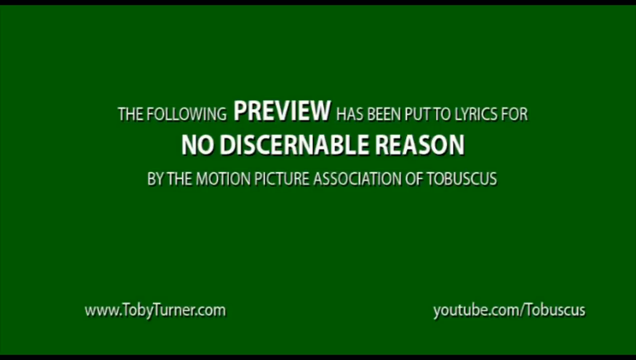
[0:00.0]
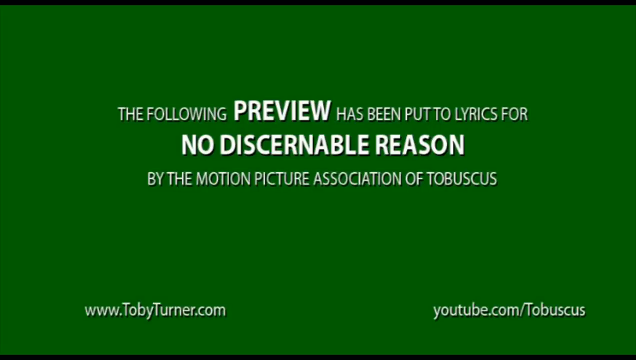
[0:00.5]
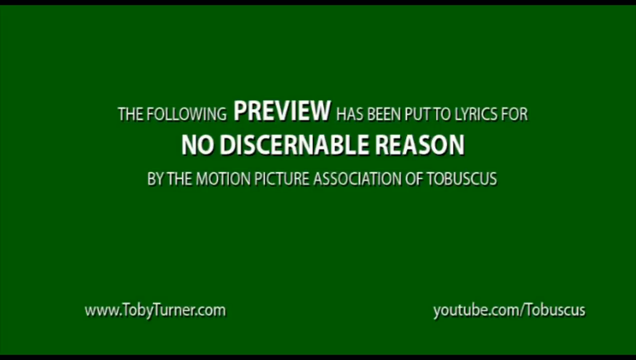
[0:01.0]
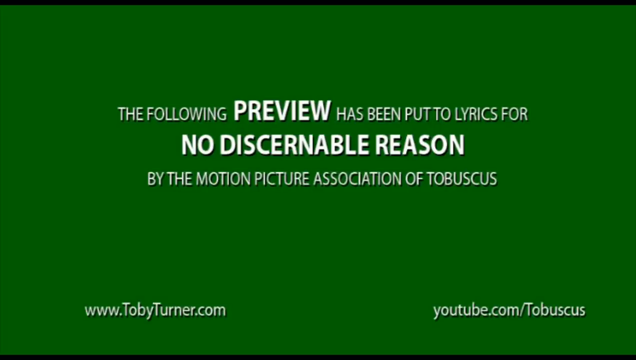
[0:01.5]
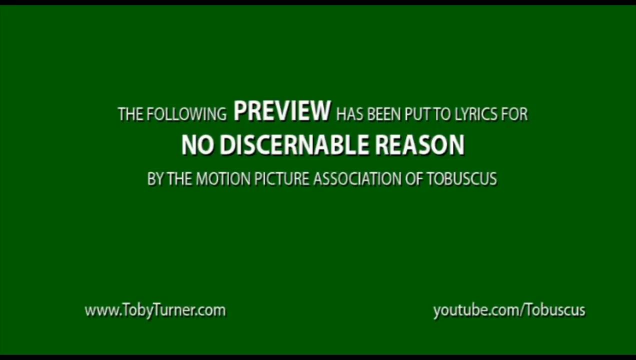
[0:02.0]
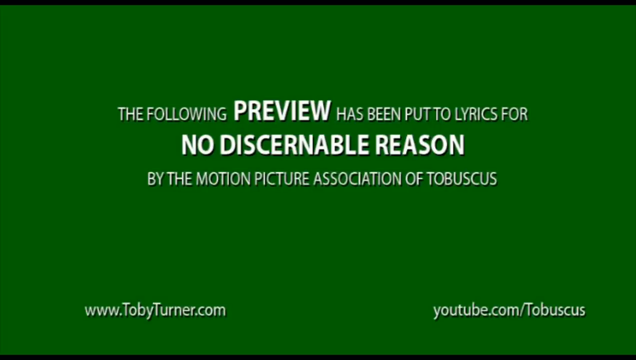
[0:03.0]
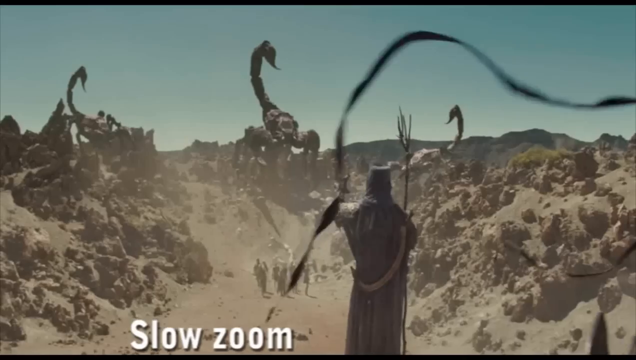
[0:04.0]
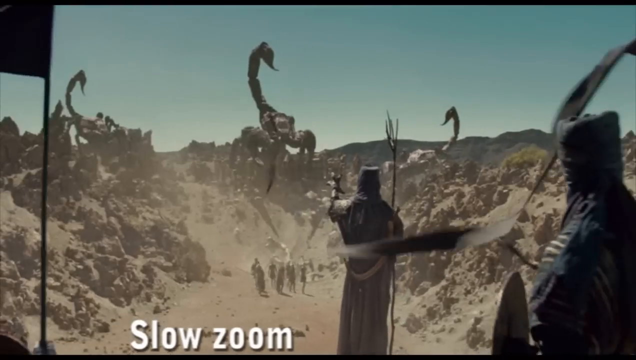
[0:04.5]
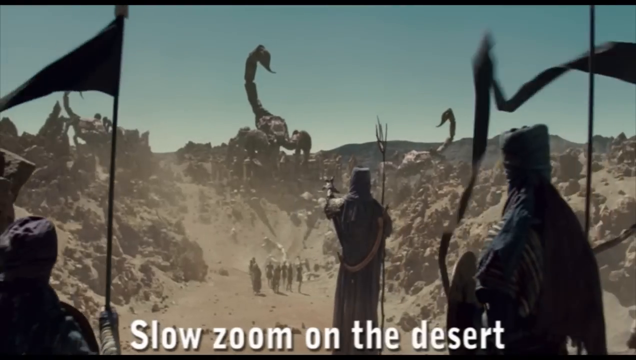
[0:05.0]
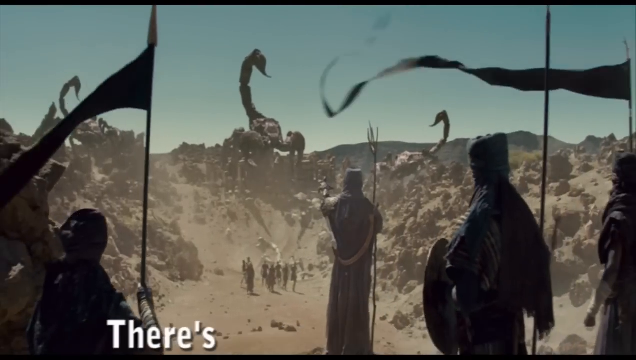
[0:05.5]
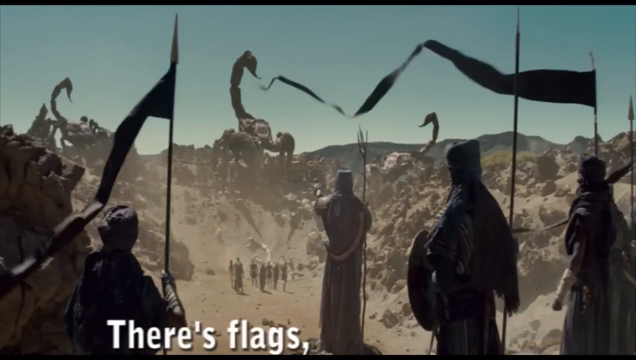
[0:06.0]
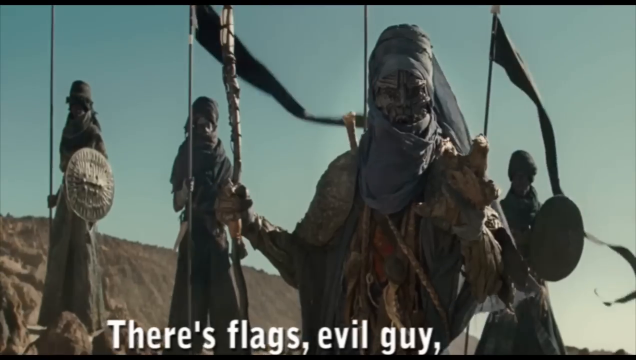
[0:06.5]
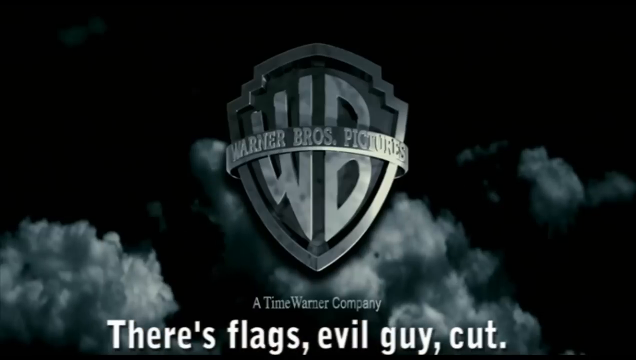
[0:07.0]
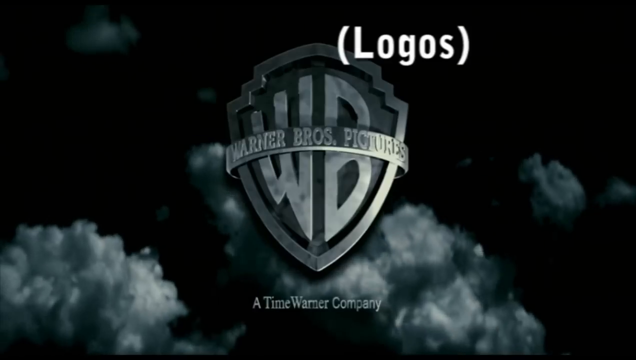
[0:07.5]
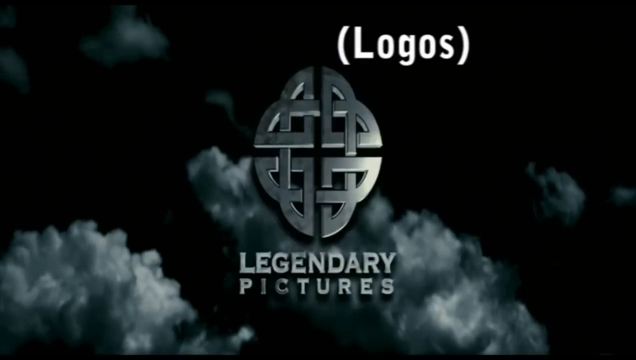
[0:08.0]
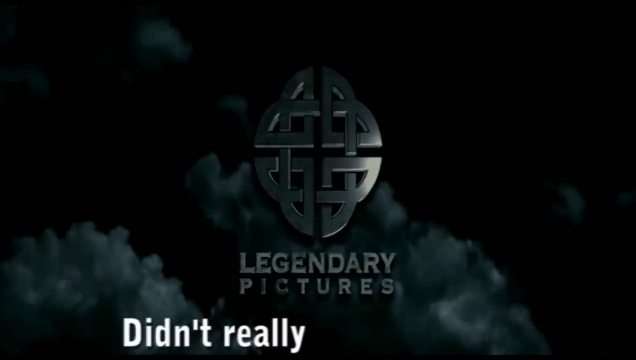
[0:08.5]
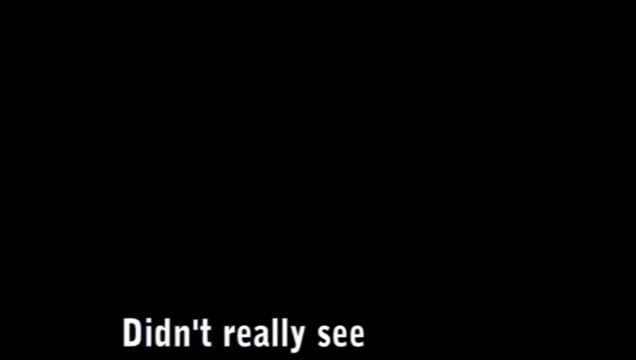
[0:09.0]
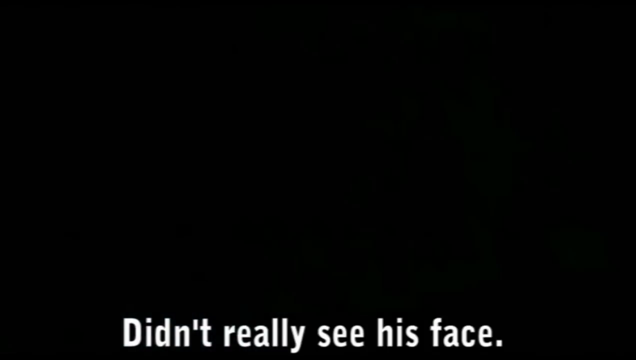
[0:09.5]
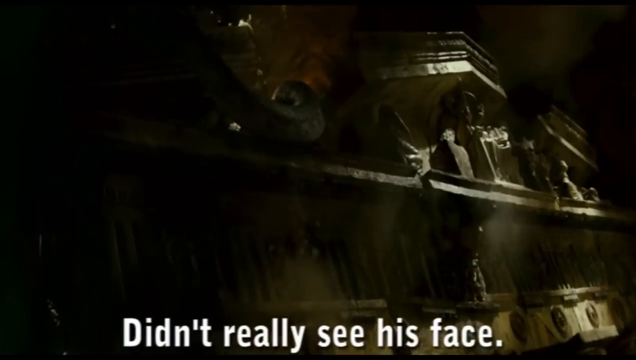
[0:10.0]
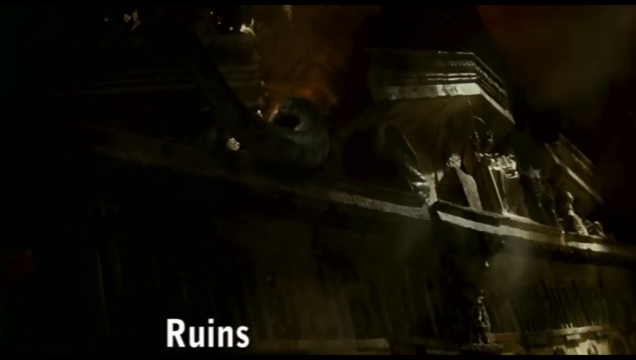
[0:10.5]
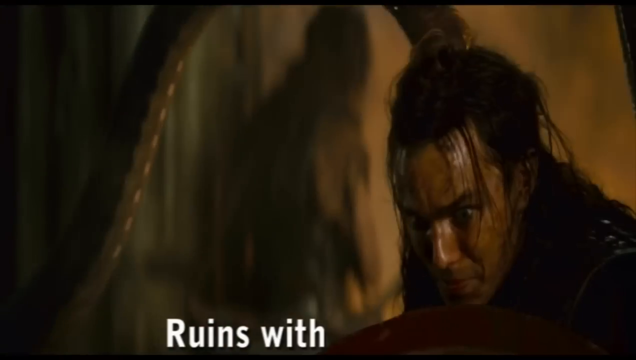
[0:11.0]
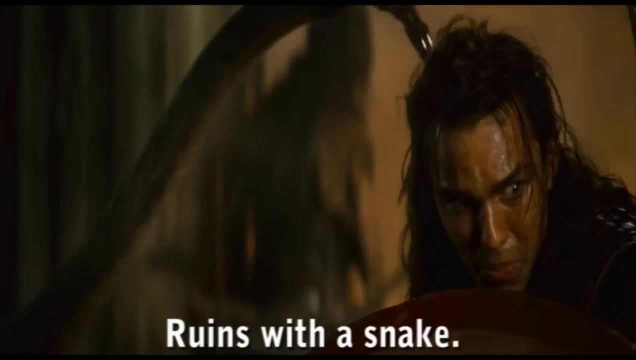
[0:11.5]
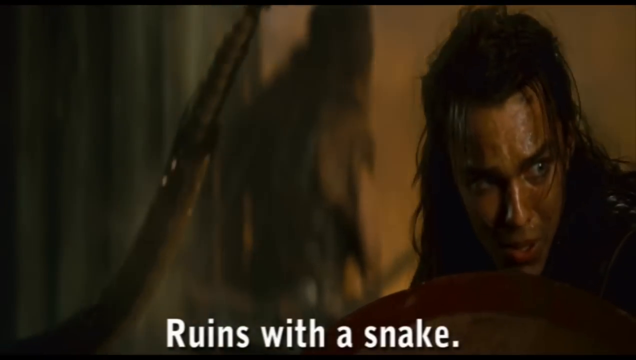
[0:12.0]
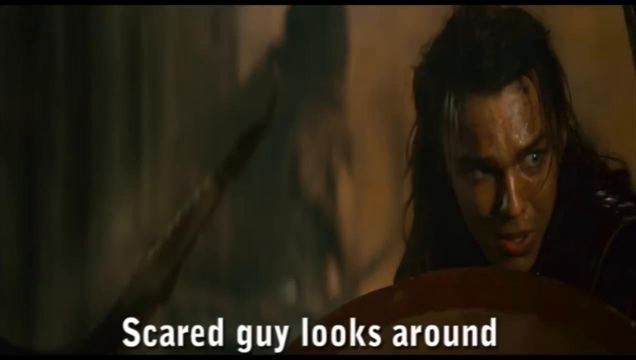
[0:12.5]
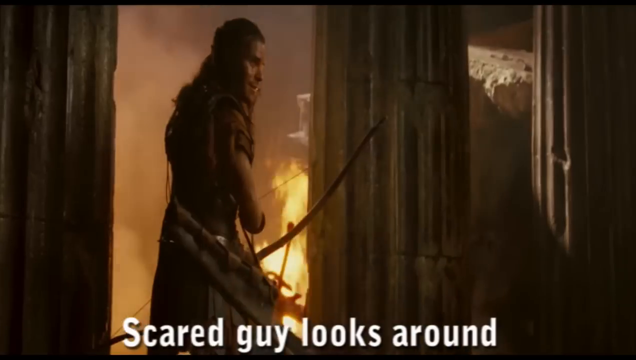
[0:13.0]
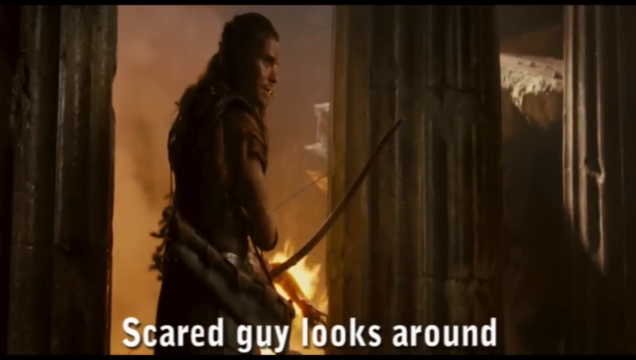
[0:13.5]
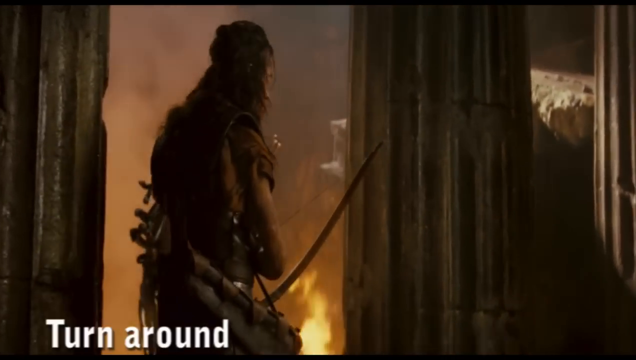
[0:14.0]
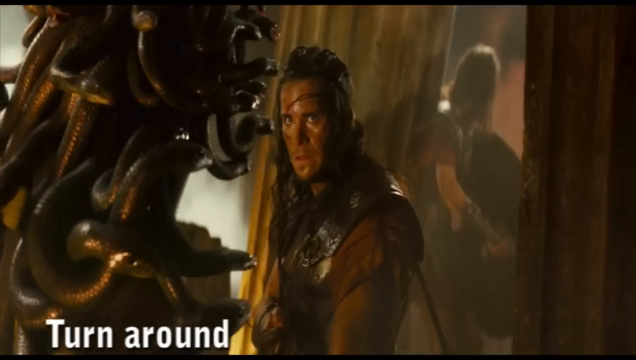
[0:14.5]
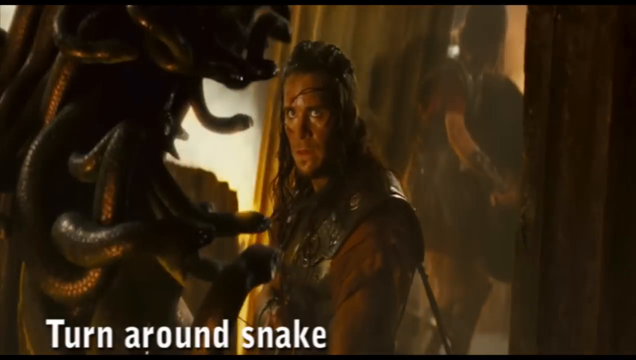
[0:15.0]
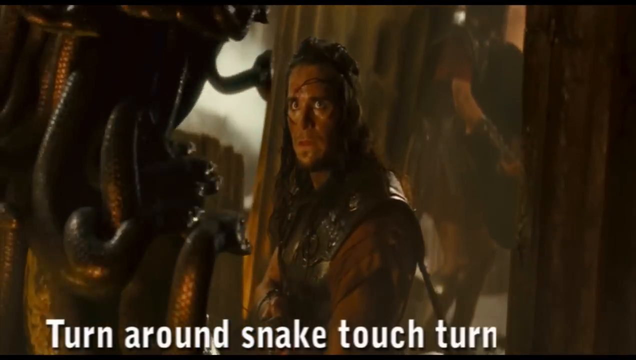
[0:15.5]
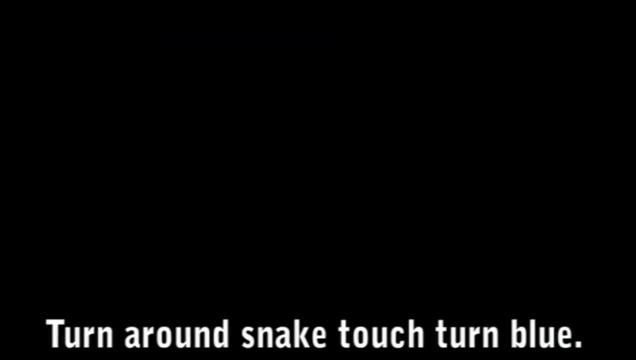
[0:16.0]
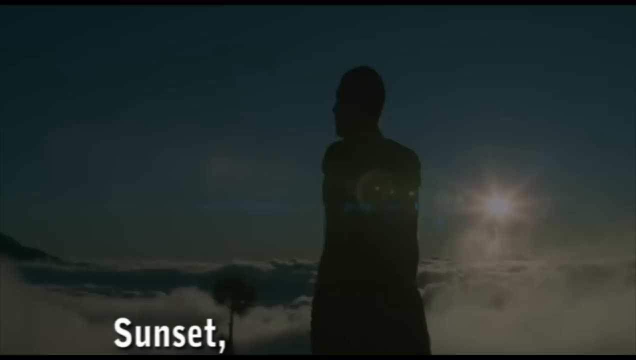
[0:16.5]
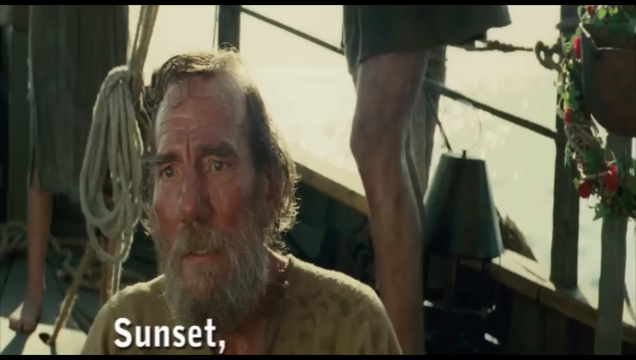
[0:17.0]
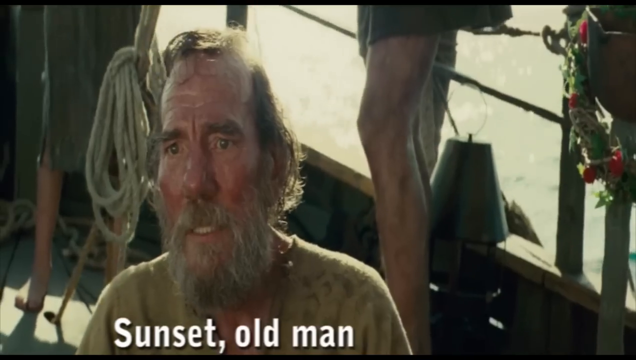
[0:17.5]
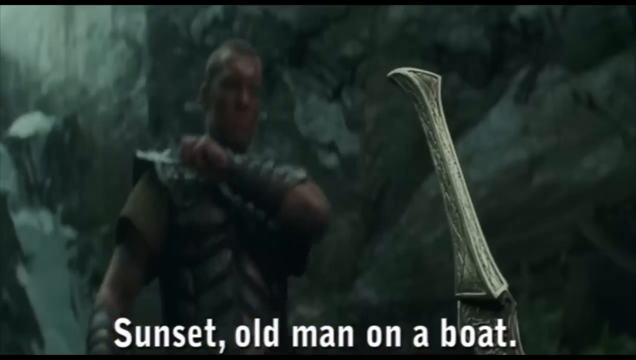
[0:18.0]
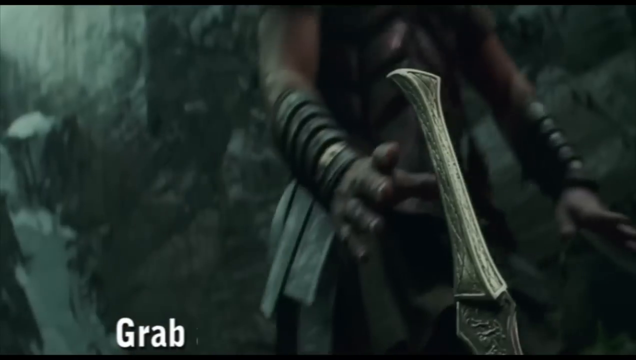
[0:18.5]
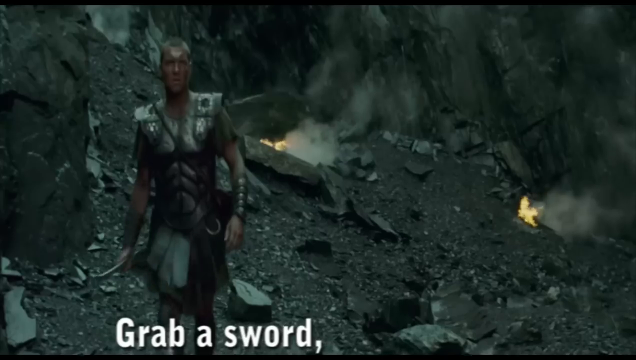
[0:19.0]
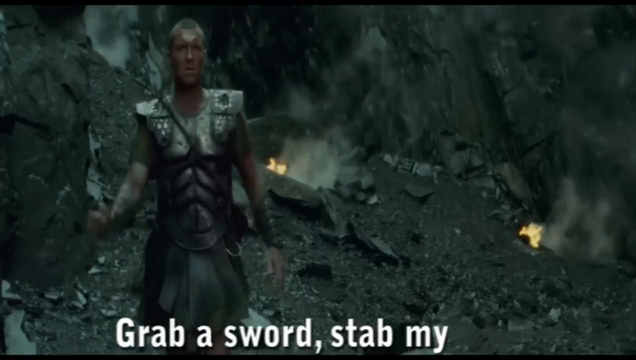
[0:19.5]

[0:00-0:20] The video opens on a green background with white text that says "the following preview has been put to lyrics for no discernible reason by the motion picture association of Turbo Scores." In the bottom left corner "www.tobyturner.com" is written in white, and in the bottom right "www.youtube.com/Turbo Scores" is written in white. The scene changes to people with turbans on their heads in an arid desert with waving flags, watching gigantic scorpions at a distance on a hill. Next comes the text "Logos" in white, followed by the Warner Bros pictures logo with Legendary pictures underneath, on a black background with clouds hovering around. A man with black hair looks terrified as a scorpion tail wags in the background. The same man holds a bow and arrow and looks around, and there is a monster with lots of snakes on its face, looking like Medusa. An old man is inside a boat, and then a man grabs a sword as he flips it around.